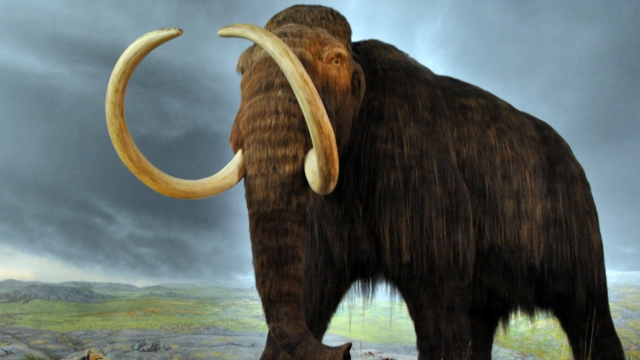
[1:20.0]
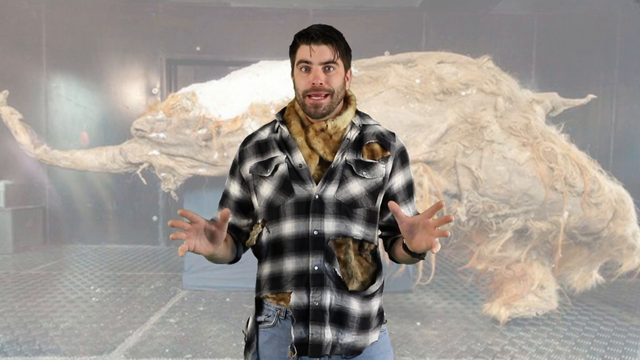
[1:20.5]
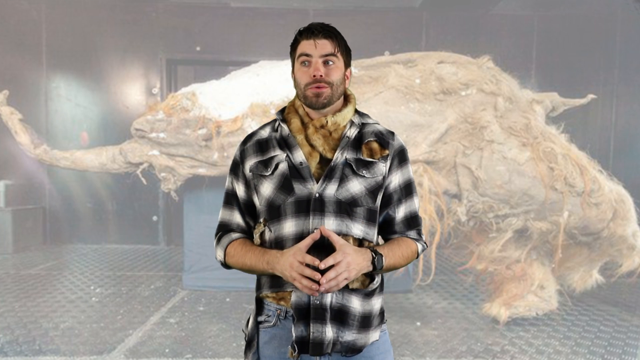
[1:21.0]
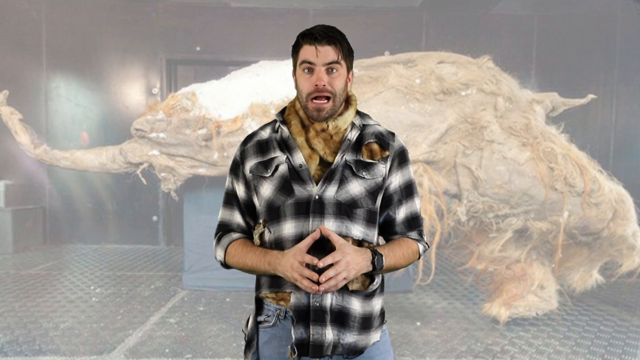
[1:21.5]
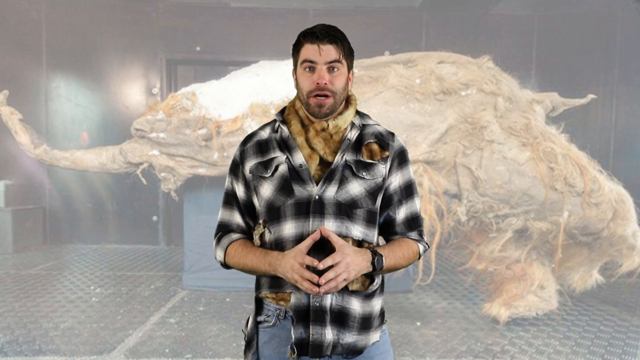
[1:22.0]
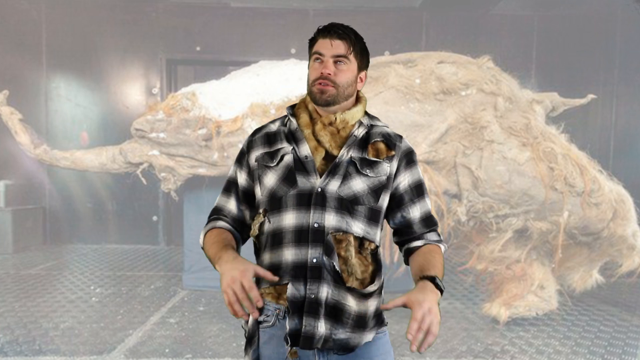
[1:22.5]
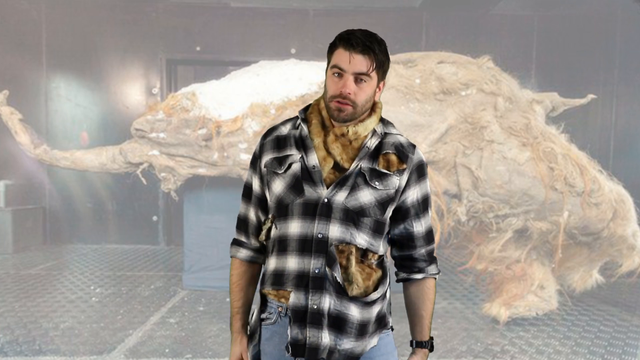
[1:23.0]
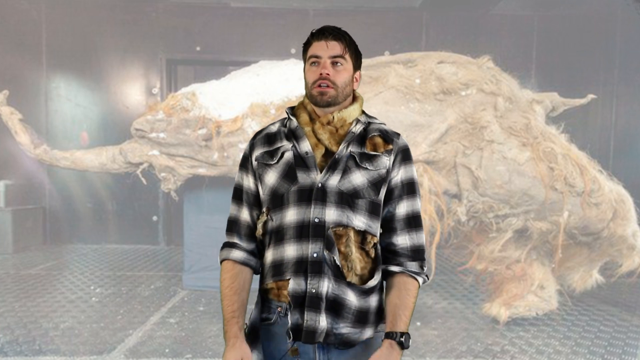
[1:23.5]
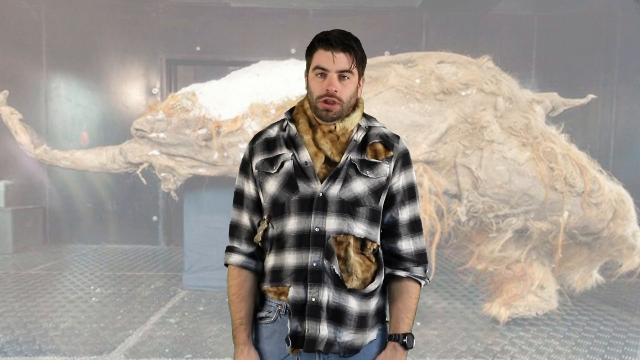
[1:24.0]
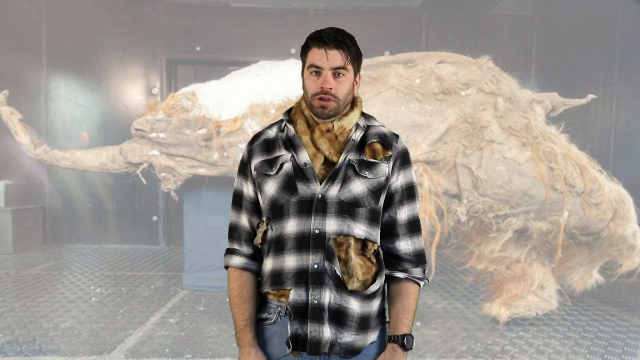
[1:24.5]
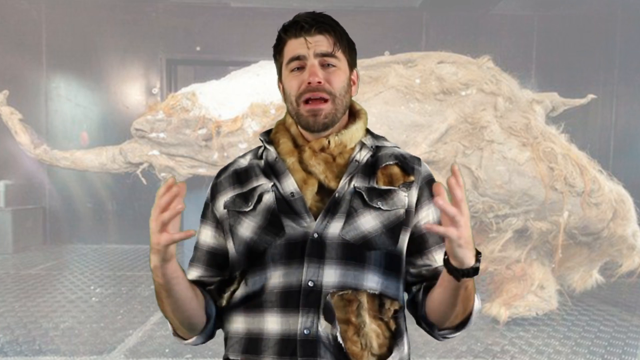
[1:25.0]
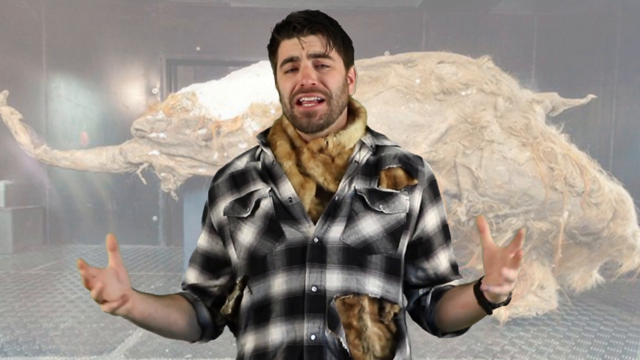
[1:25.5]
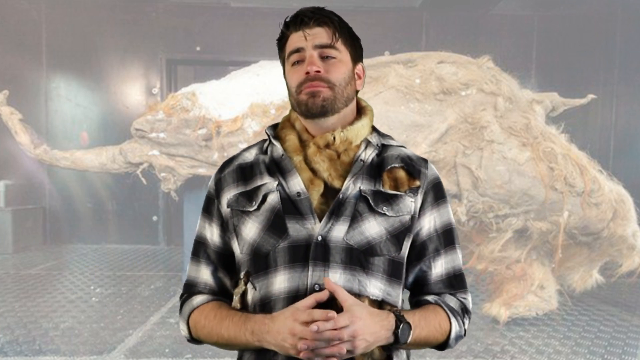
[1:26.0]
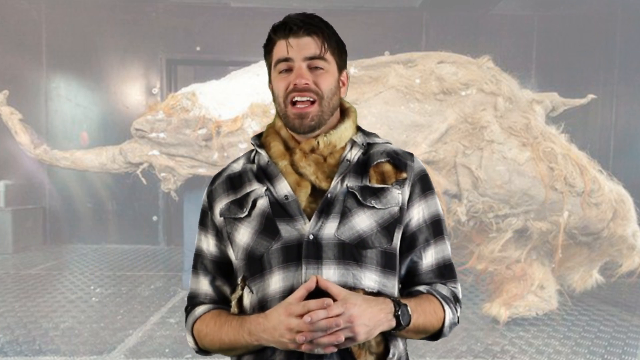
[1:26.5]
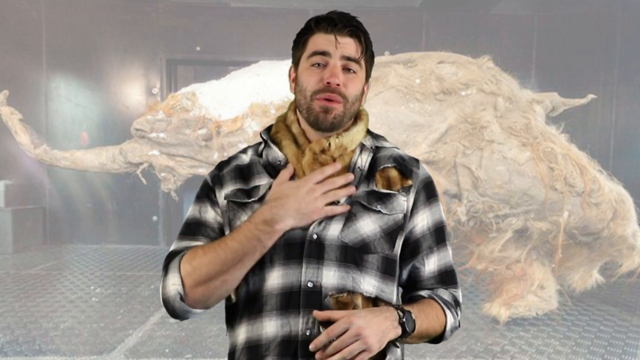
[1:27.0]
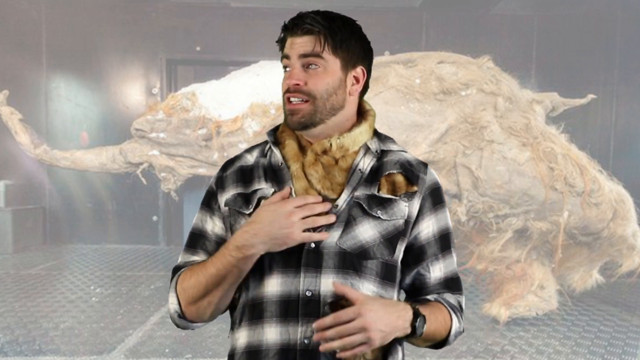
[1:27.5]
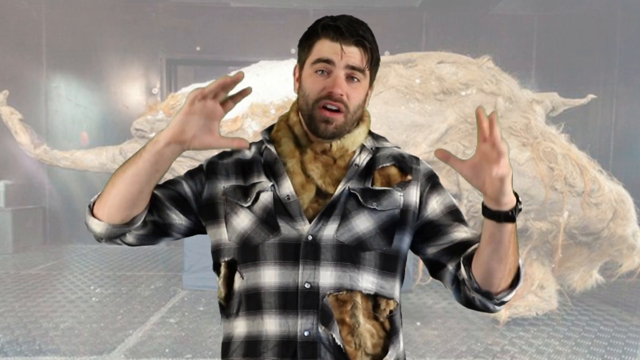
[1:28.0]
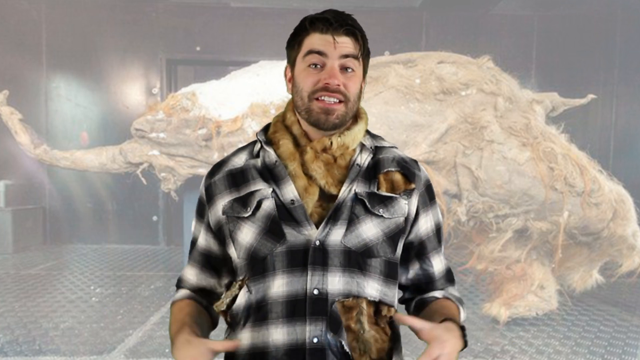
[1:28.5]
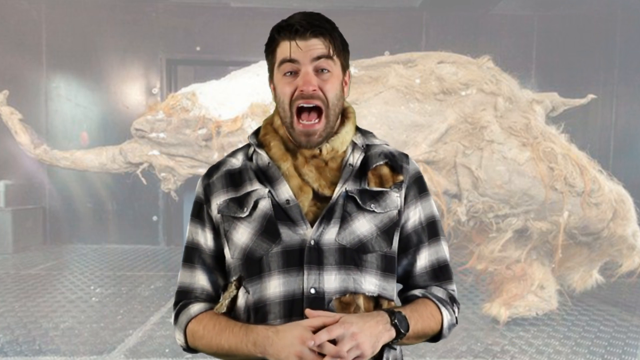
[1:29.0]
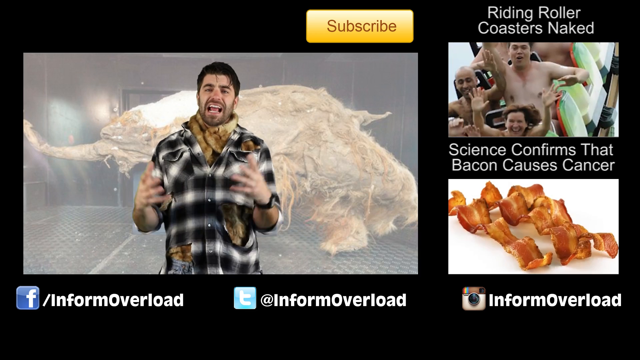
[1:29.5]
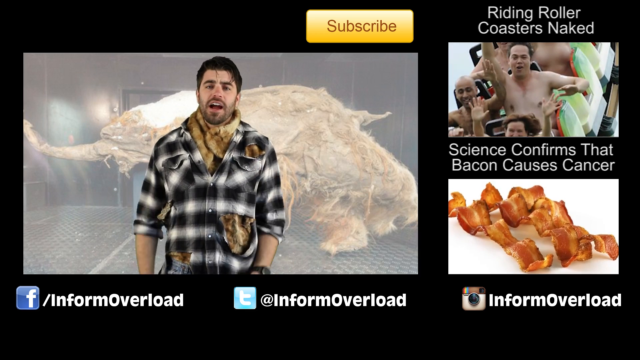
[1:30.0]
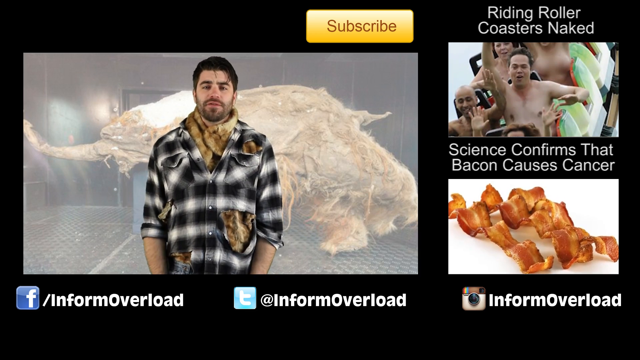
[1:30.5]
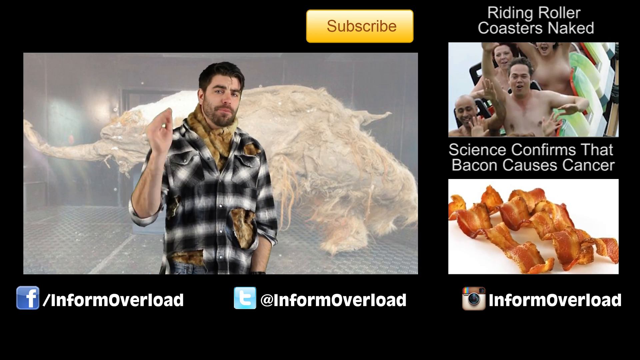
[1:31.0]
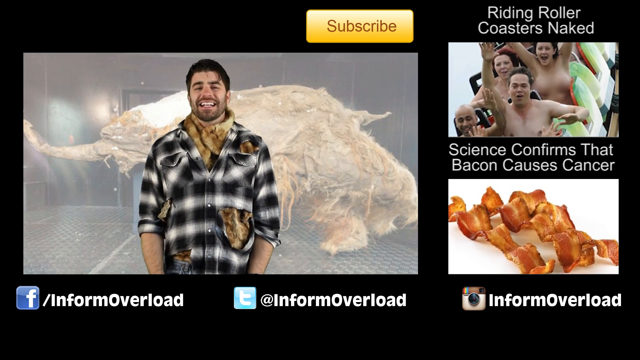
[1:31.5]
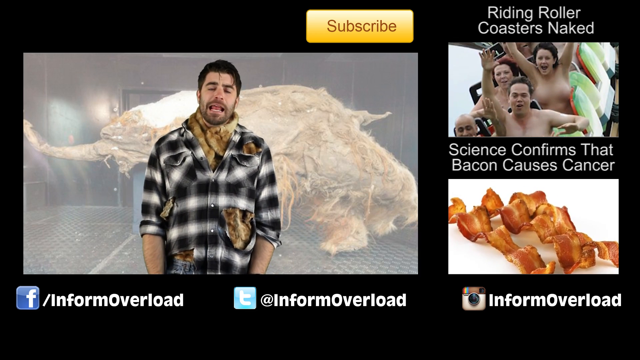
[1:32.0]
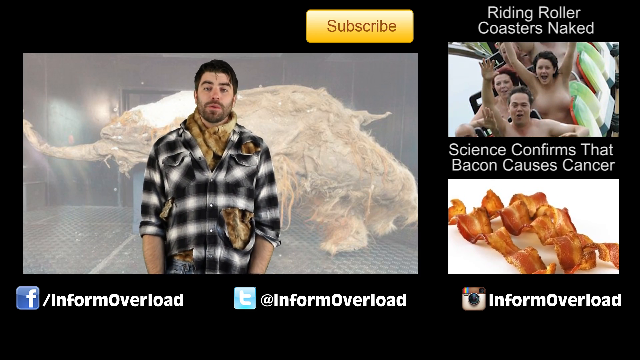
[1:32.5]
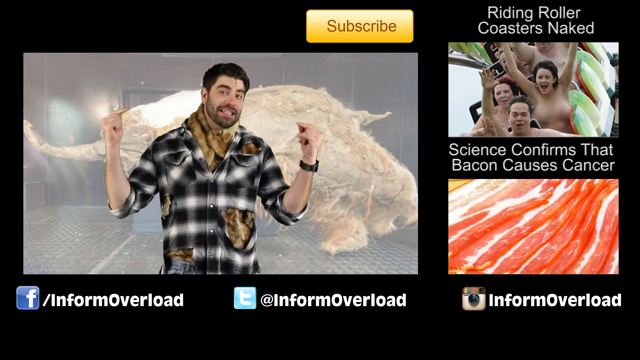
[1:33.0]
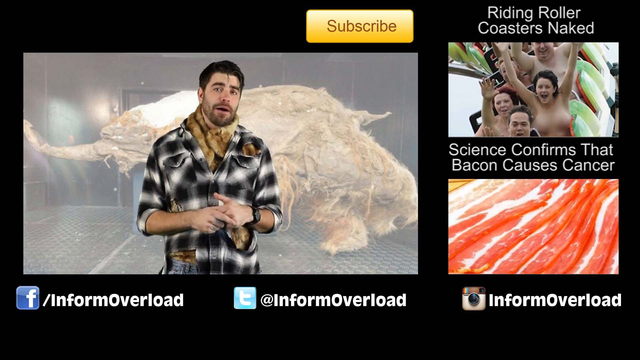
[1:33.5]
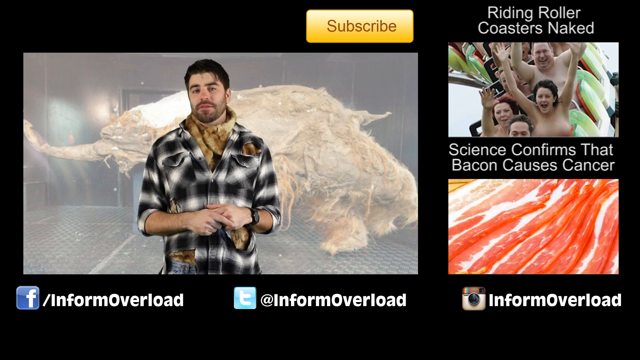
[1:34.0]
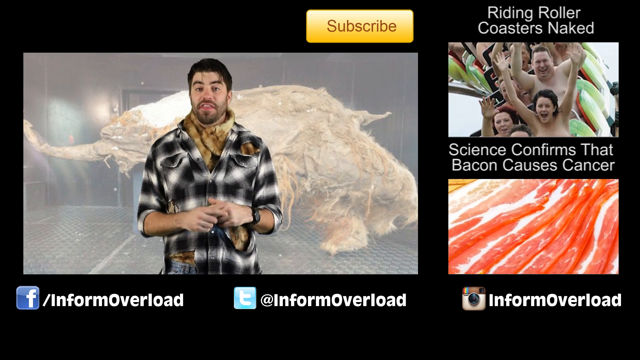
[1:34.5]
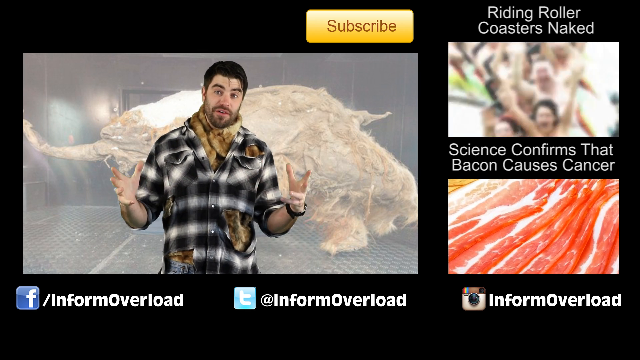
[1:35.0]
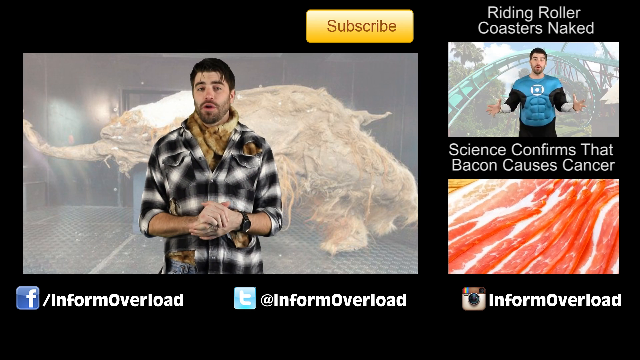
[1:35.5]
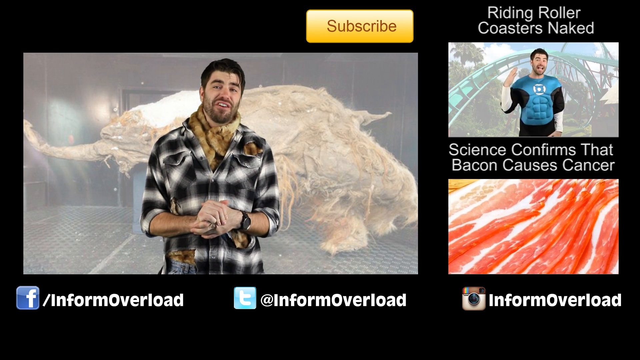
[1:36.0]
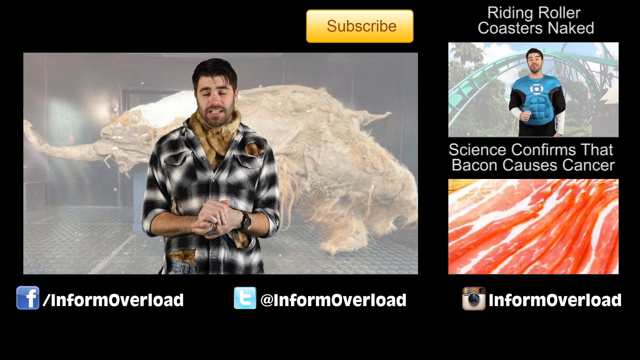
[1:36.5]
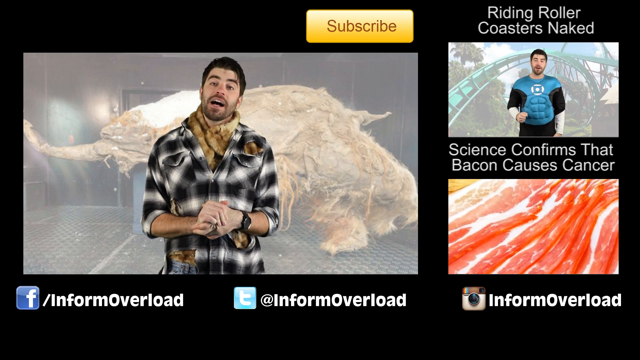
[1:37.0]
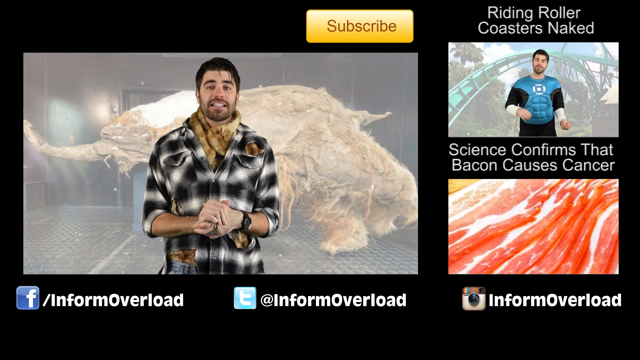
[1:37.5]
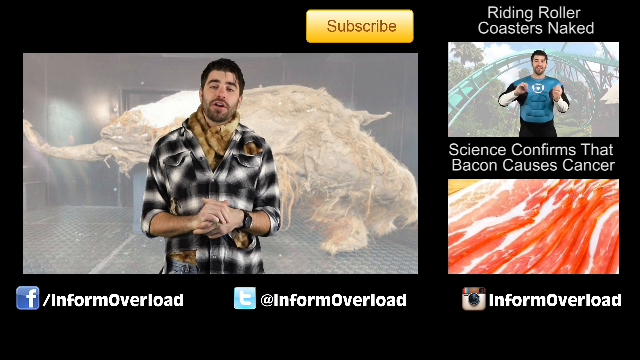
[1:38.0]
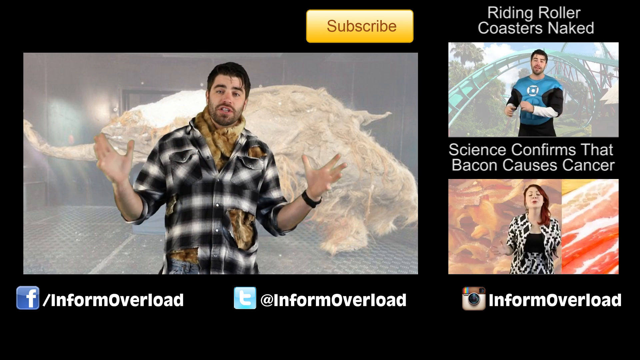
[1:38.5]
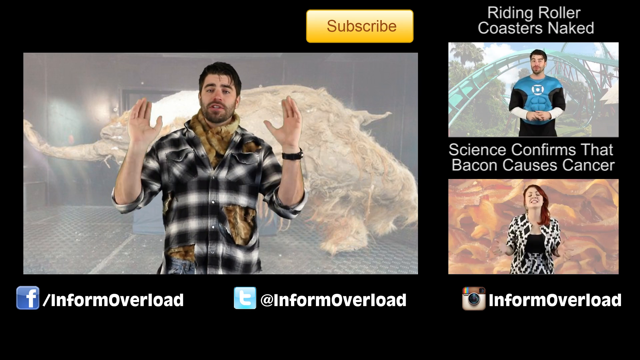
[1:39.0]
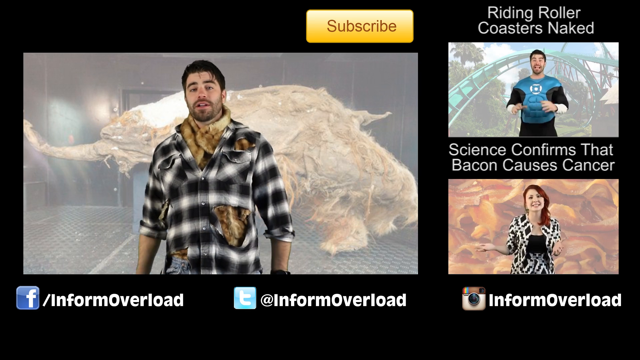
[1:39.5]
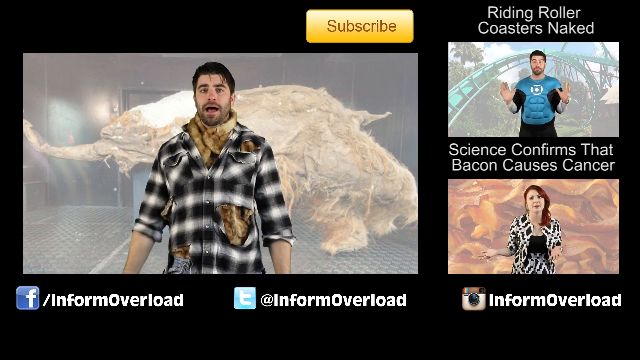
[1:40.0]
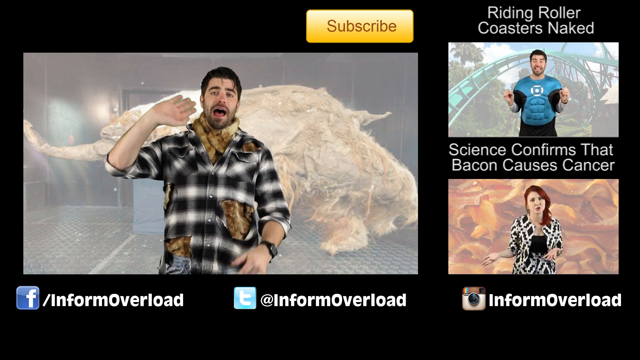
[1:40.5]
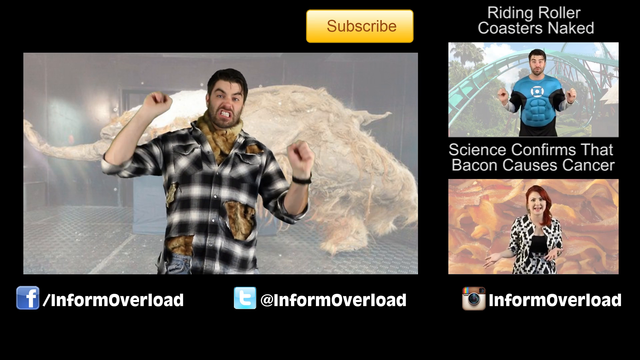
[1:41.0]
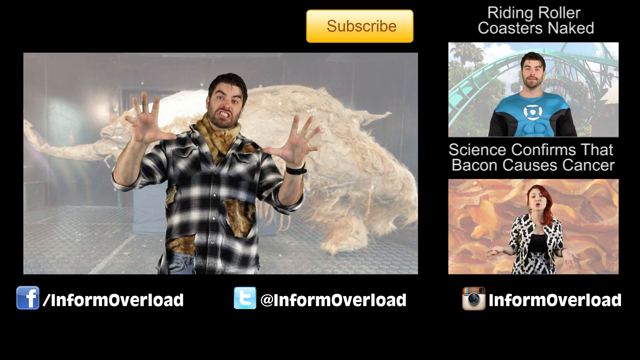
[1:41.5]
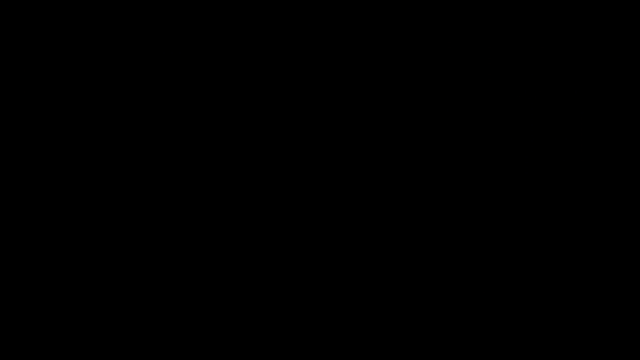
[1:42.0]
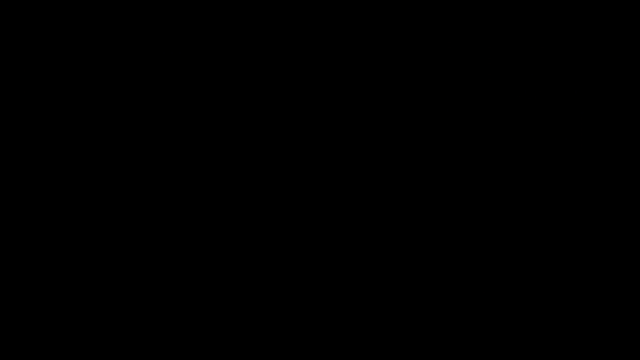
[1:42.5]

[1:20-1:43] The artist's rendition of the woolly mammoth shoots off to the right side of the screen. The video cuts back to Michael, who is now using a lot of eye movements along with body language and hand movements, waving his hands around a lot. He touches his chest, possibly signaling sadness. The view kind of zooms away from him, and a black border appears around the video with two additional videos on the right side. The top one reads "Riding roller coaster's naked", and beneath it, in white text over the black background, another reads "Science confirms that bacon causes cancer". At the very bottom it reads "Inform Overload" with a Facebook logo, a Twitter handle for Inform Overload, and an Instagram logo that also says "Inform Overload". The main video keeps playing, with Michael apparently saying goodbye, while the videos on the top right and bottom right continue playing on the side.